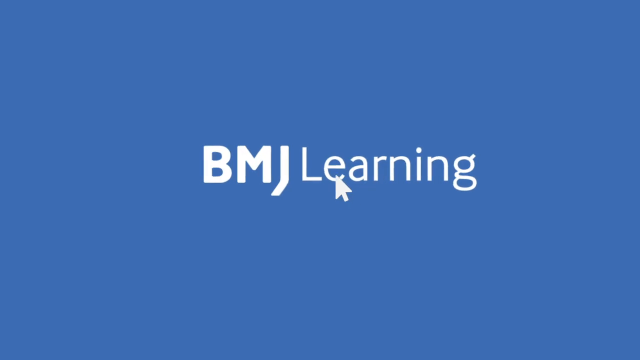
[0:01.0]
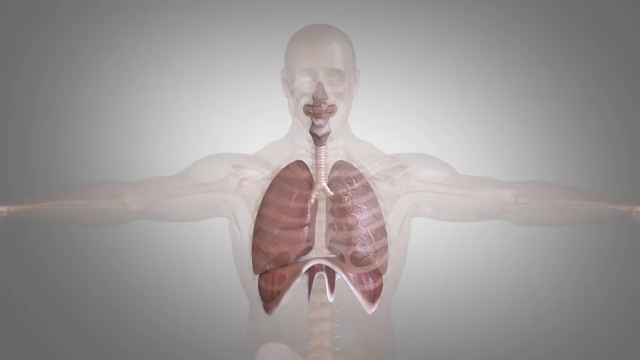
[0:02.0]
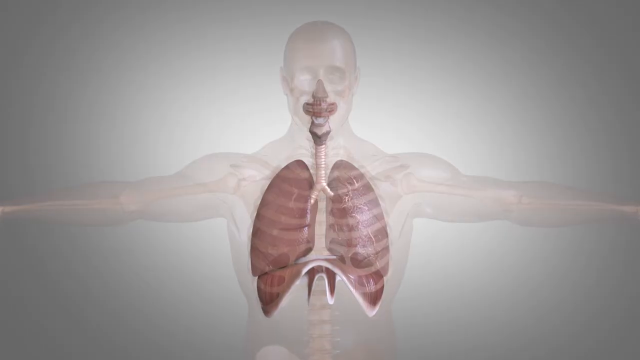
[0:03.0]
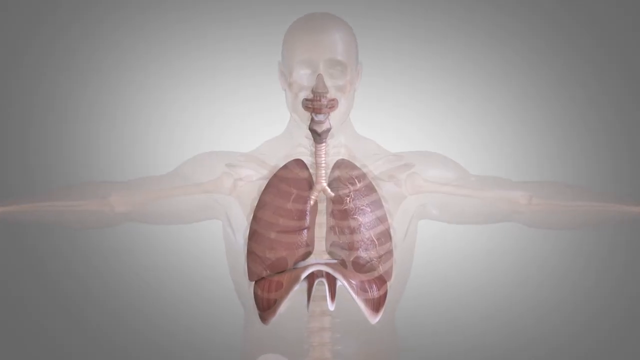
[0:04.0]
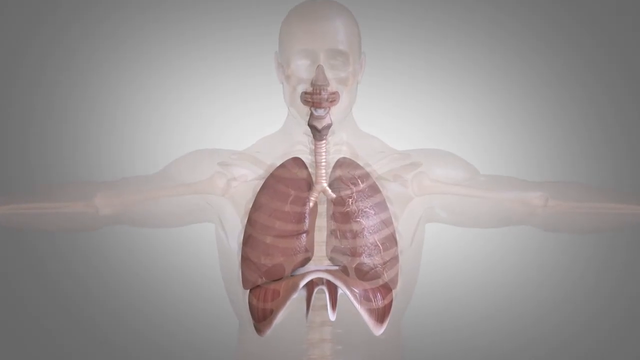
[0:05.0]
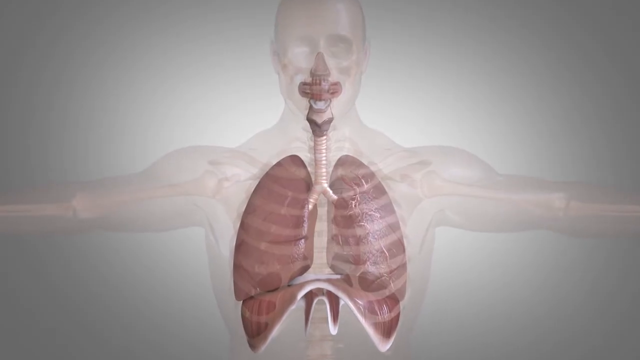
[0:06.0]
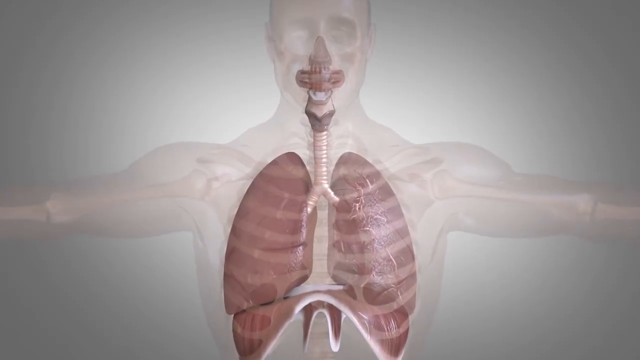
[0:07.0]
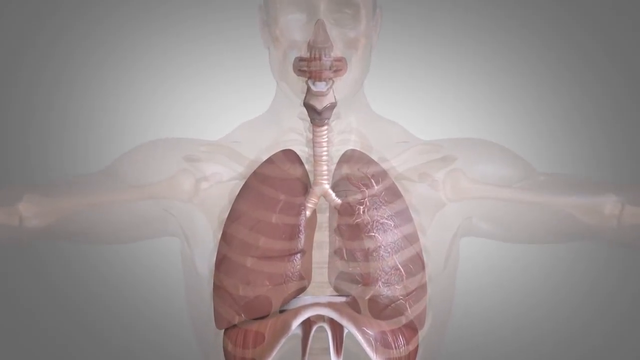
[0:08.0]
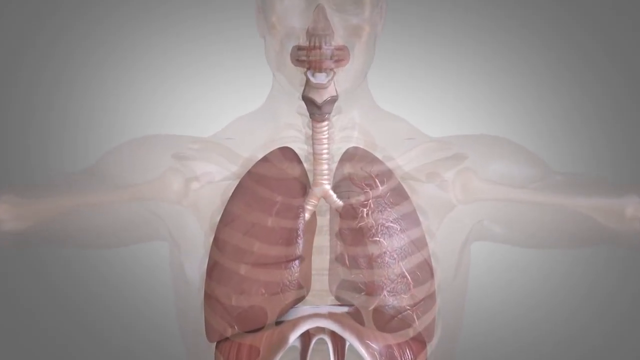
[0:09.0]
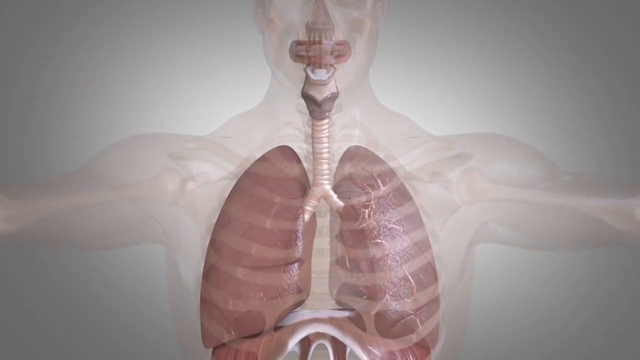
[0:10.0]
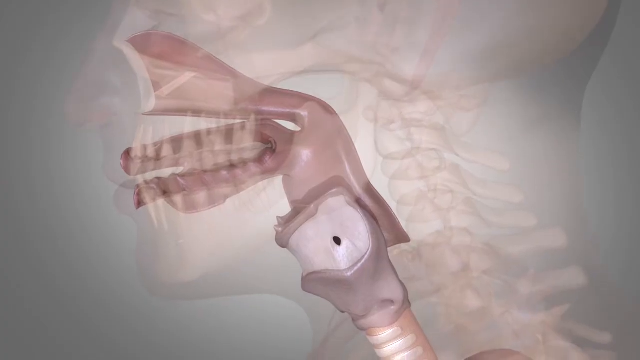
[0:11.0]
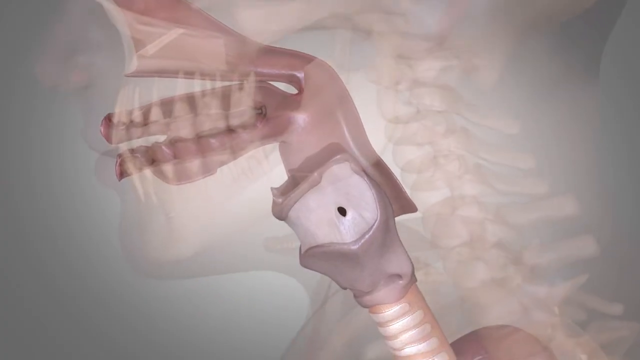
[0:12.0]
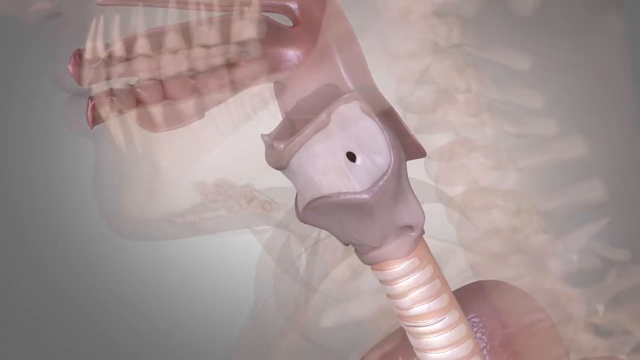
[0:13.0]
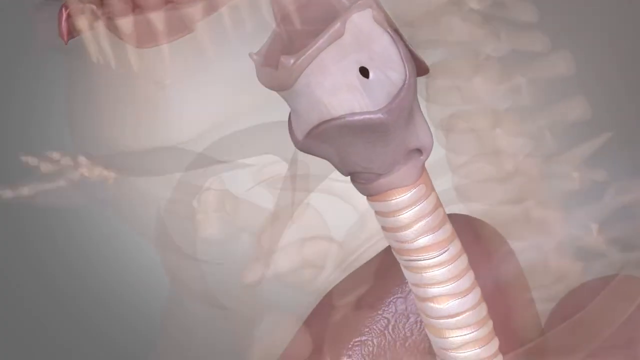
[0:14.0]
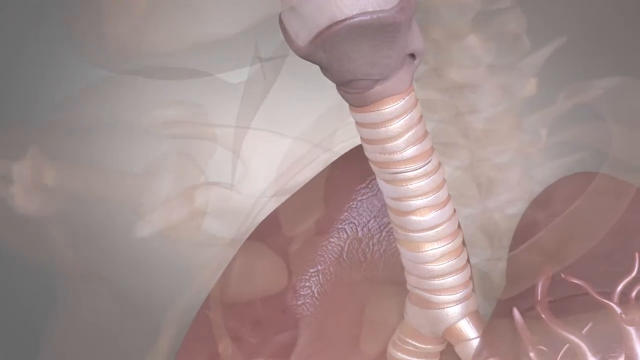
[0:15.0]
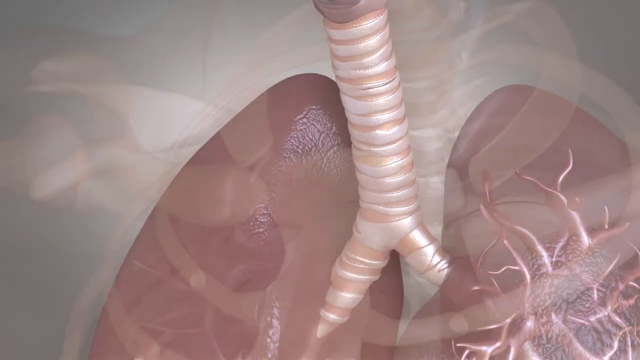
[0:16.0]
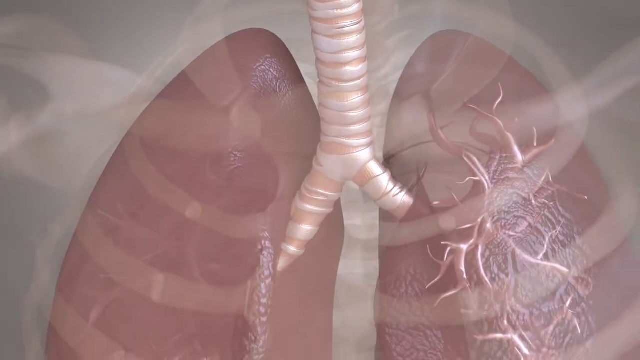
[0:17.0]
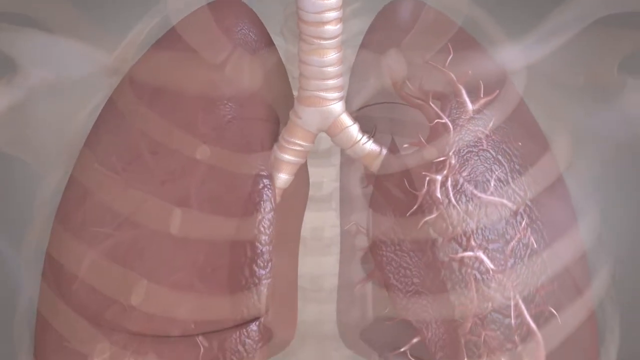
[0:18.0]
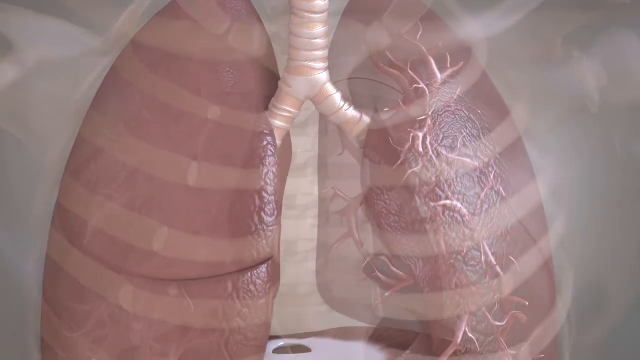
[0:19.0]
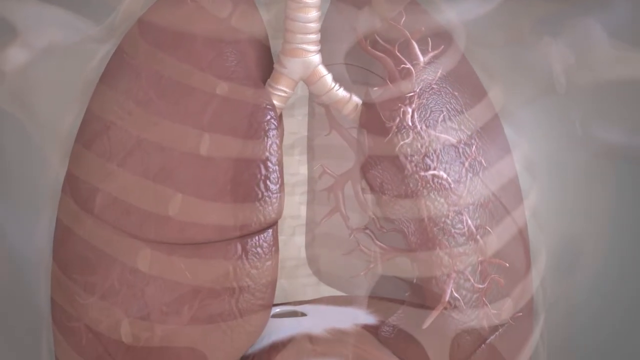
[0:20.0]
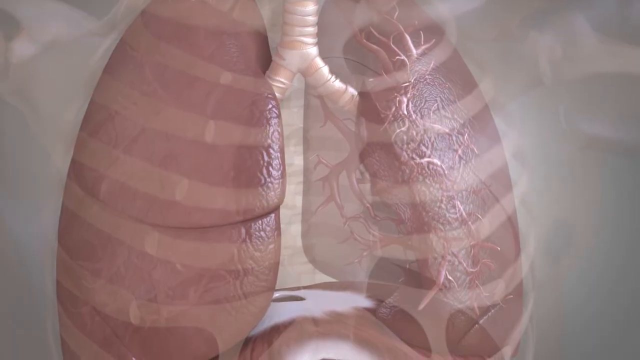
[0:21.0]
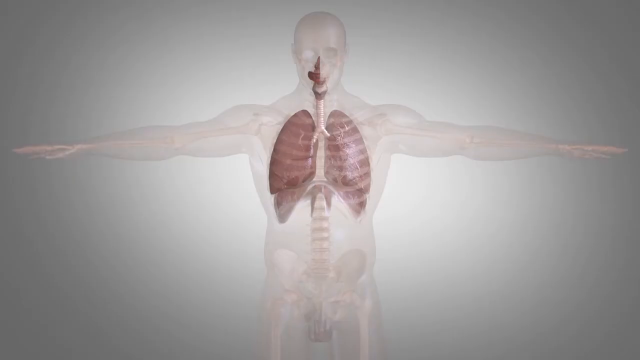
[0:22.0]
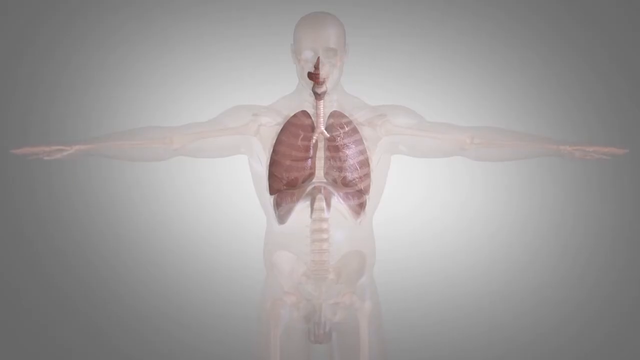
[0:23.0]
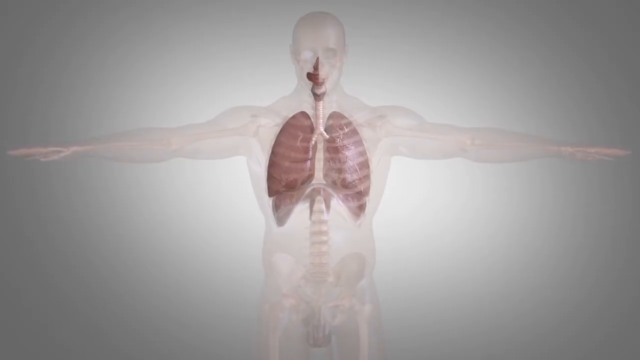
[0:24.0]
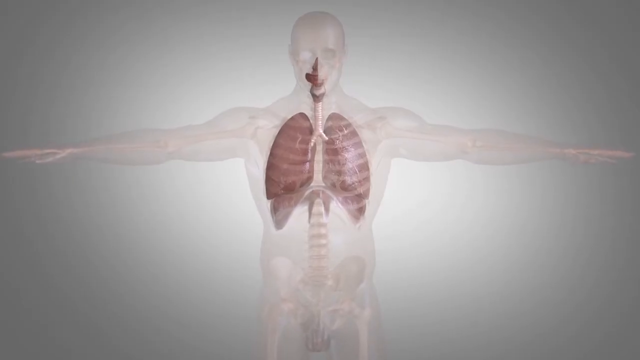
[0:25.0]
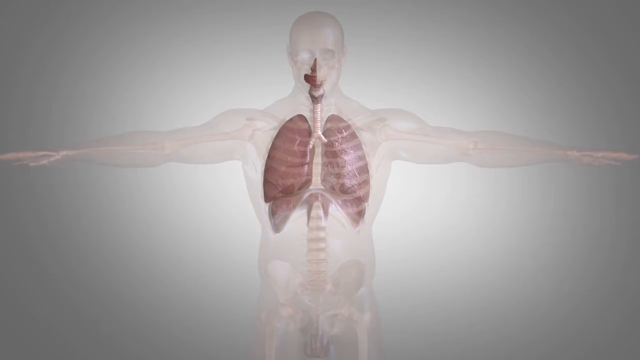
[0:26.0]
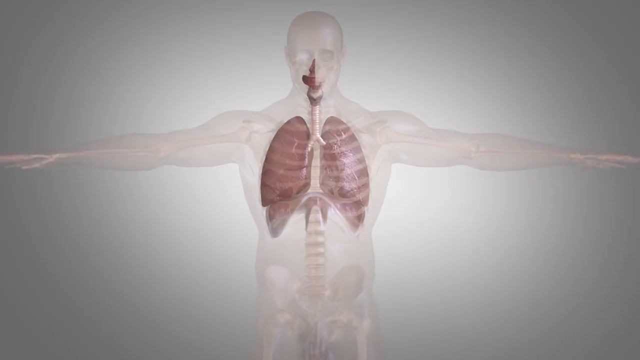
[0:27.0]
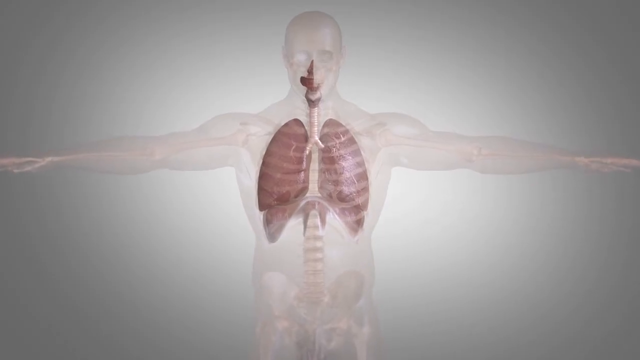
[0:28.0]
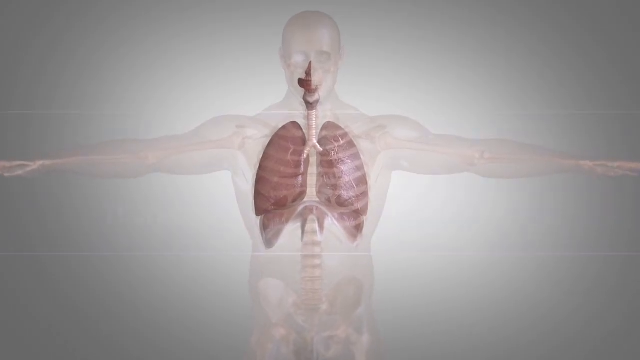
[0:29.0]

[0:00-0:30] A title card reads "BMJ Learning". An arrow cursor appears to click on the title, and the screen switches to a transparent model of the human body with its arms outstretched. Inside the model the lungs, the esophagus, the thyroid and the inside of the mouth are visible. The lungs are pink, the area behind the mouth is pink, and the esophagus is white. The camera closes in on the model, and then the same model is seen from the side: the translucent outline of the body, with the gums and what looks like the sinuses and the throat showing pink through it, along with the thyroid and the top of the esophagus. The camera zooms as the model turns, then moves down into the chest, where the esophagus and the bronchial tubes going into the lungs are visible. In the lung on the right side of the screen there is what looks like a spider's web of veins and airways.